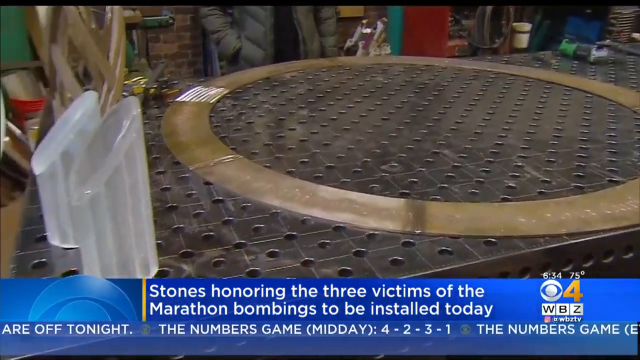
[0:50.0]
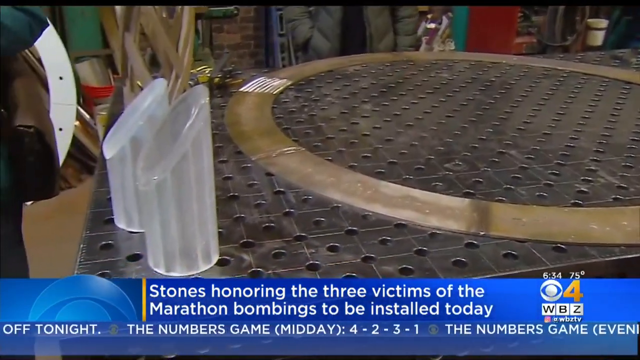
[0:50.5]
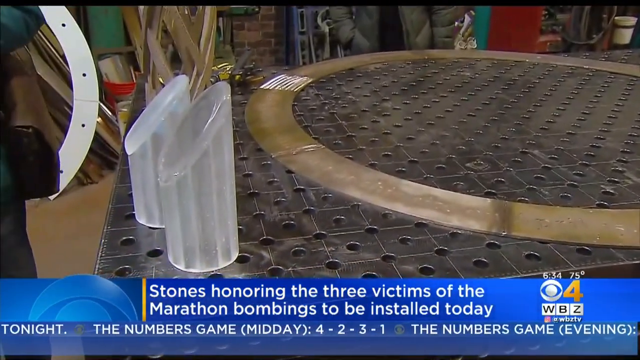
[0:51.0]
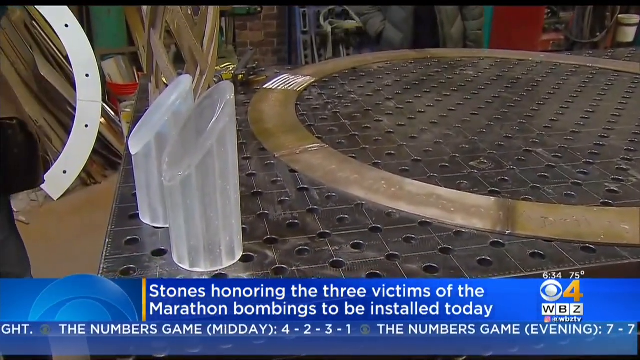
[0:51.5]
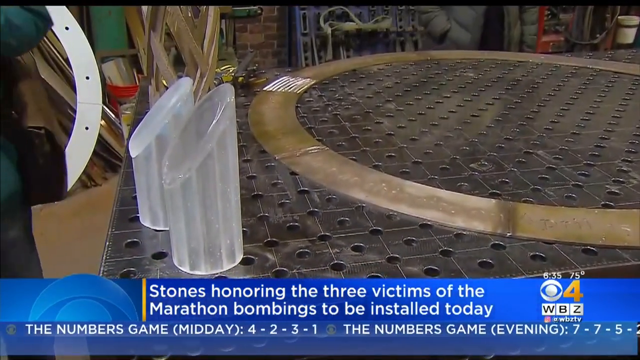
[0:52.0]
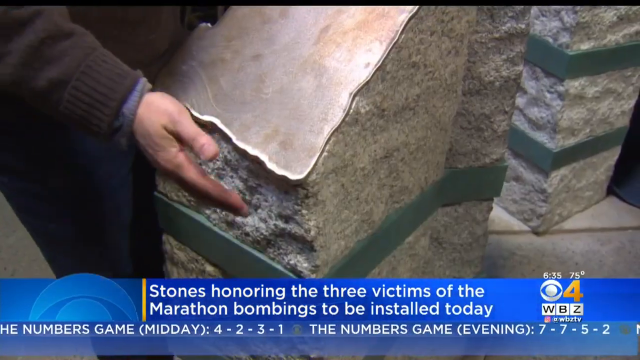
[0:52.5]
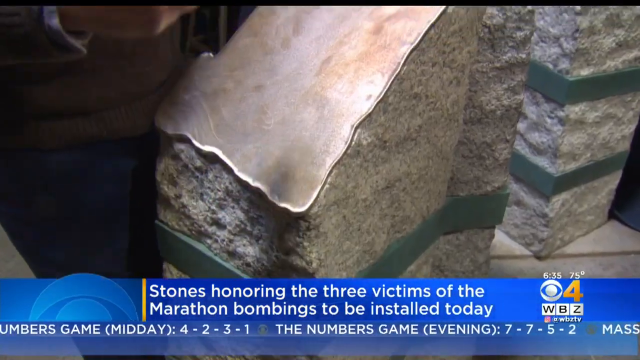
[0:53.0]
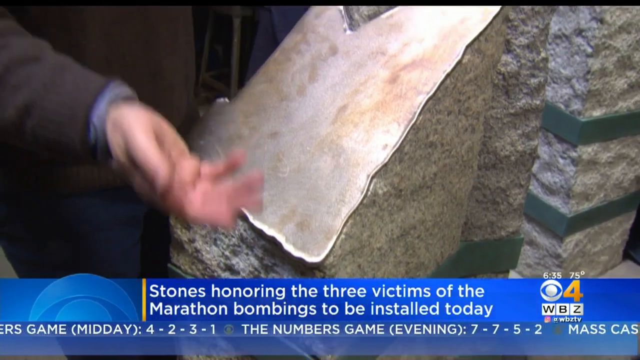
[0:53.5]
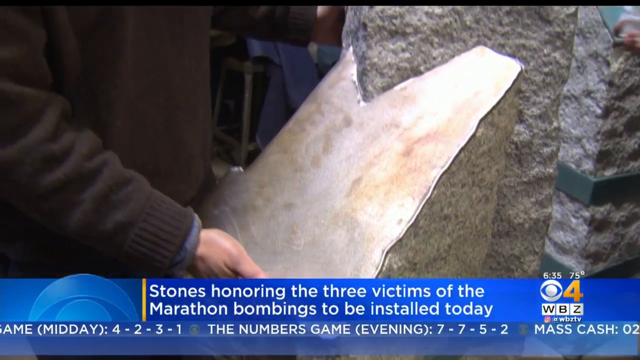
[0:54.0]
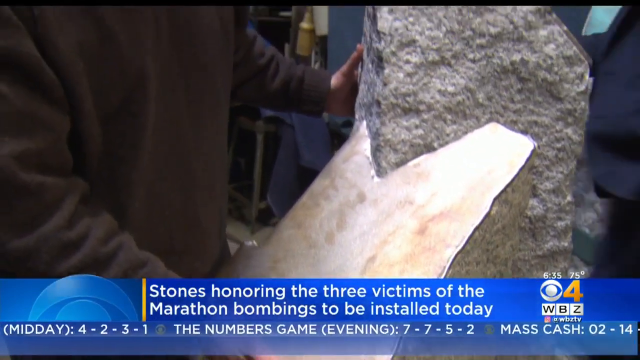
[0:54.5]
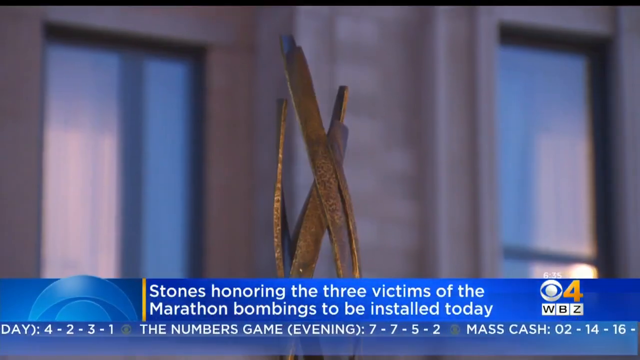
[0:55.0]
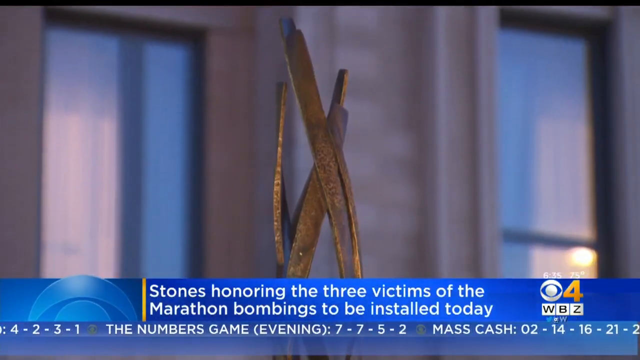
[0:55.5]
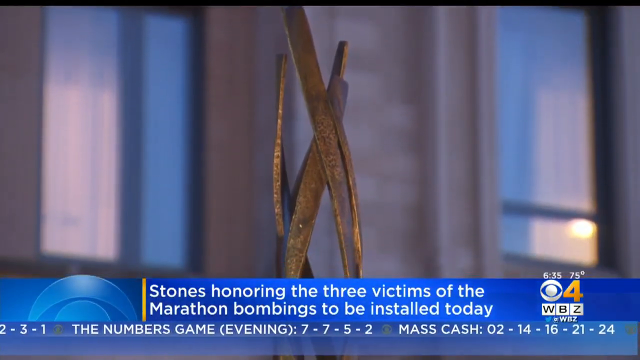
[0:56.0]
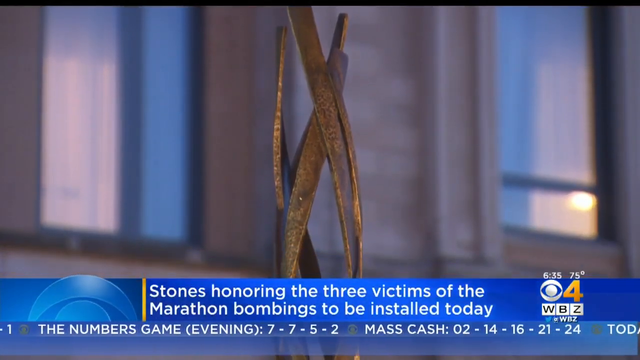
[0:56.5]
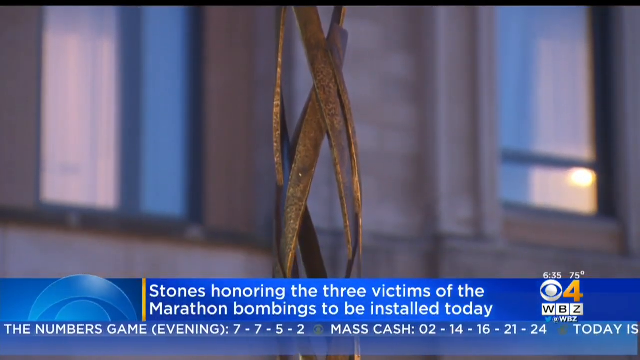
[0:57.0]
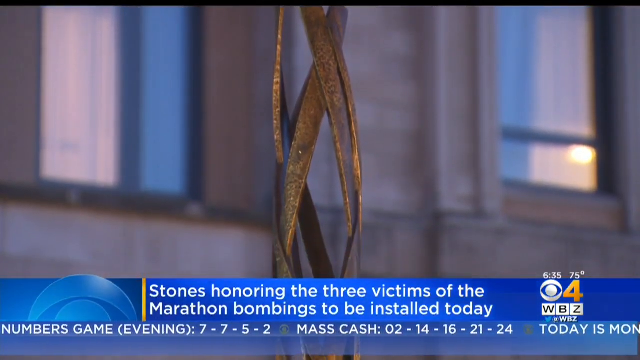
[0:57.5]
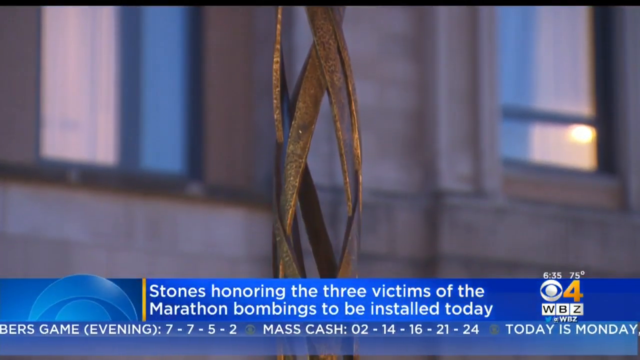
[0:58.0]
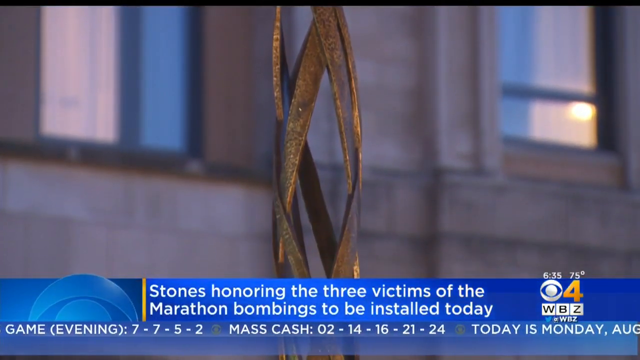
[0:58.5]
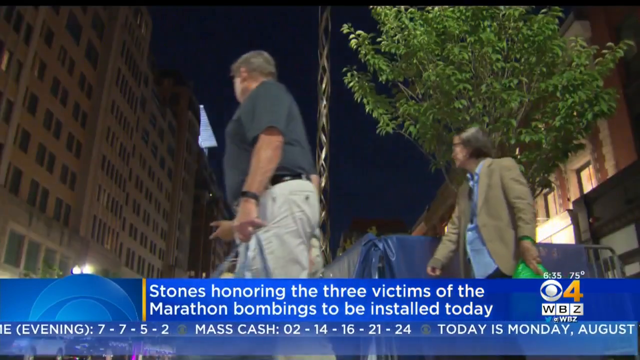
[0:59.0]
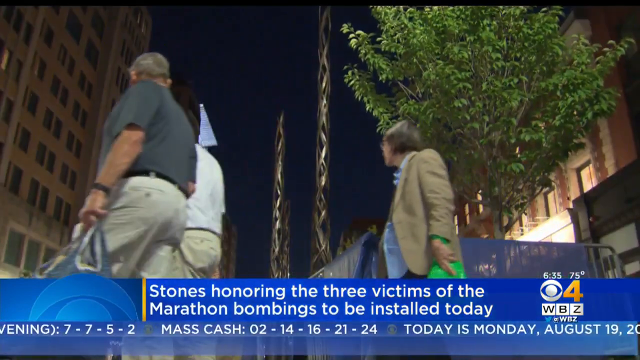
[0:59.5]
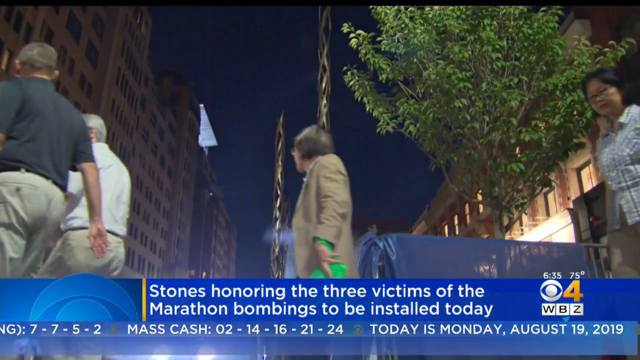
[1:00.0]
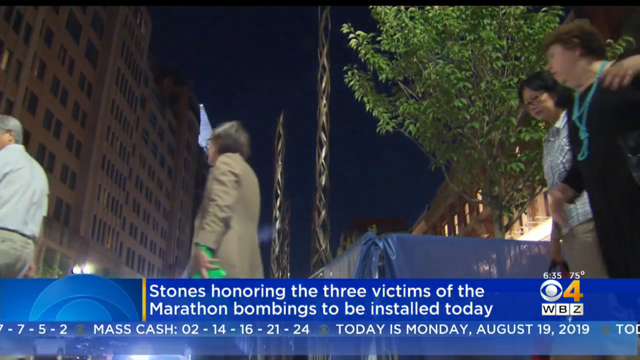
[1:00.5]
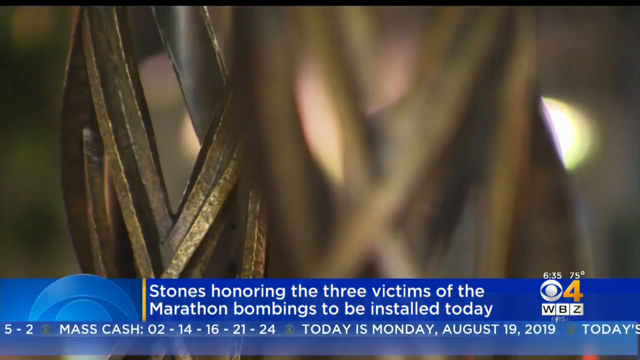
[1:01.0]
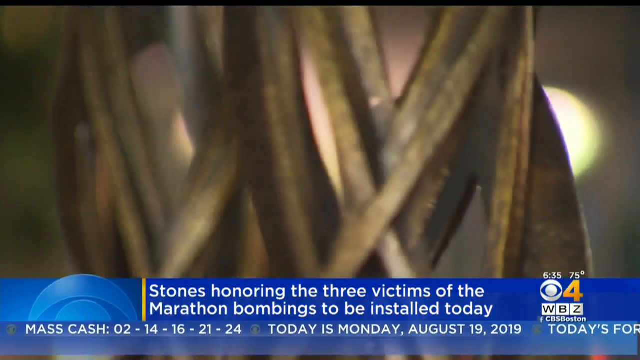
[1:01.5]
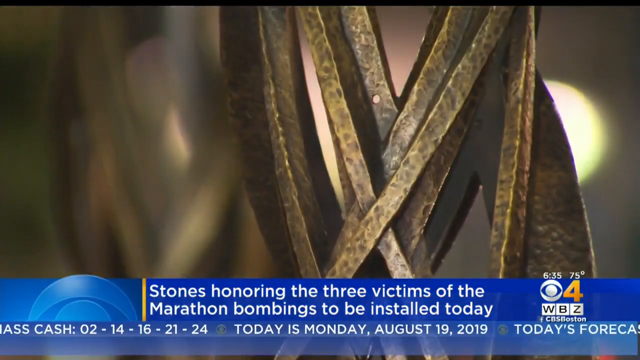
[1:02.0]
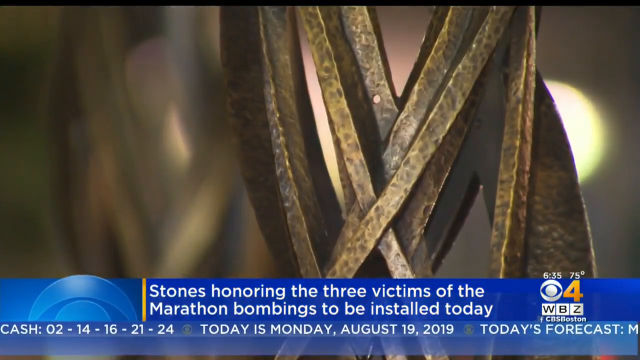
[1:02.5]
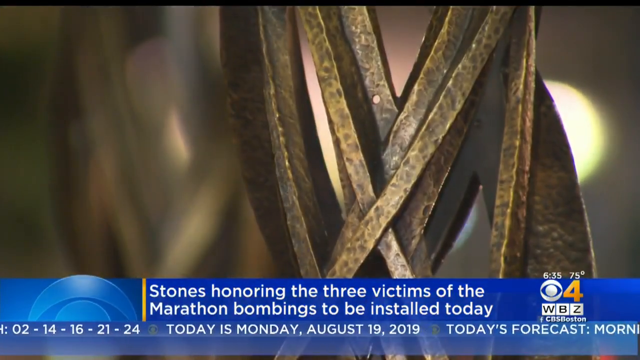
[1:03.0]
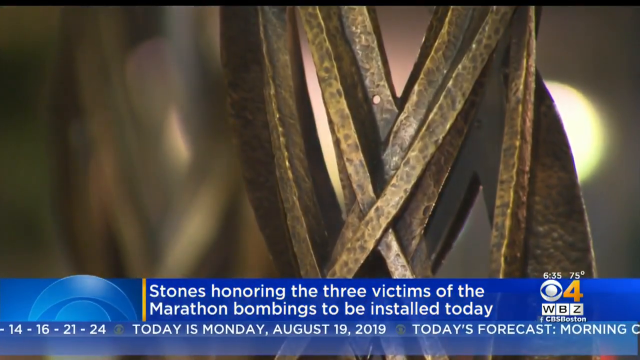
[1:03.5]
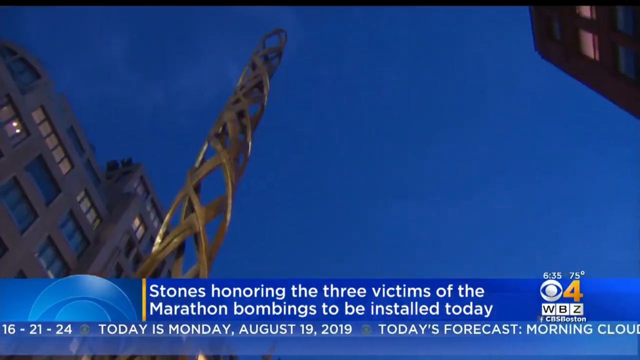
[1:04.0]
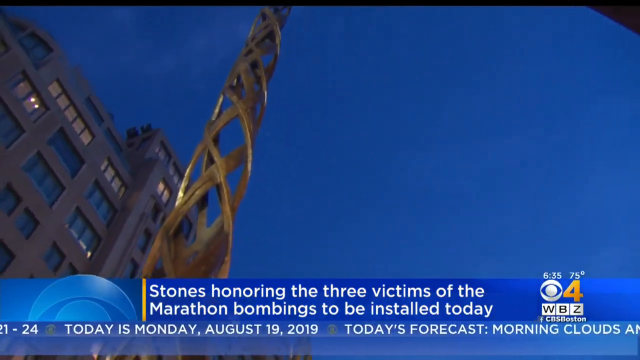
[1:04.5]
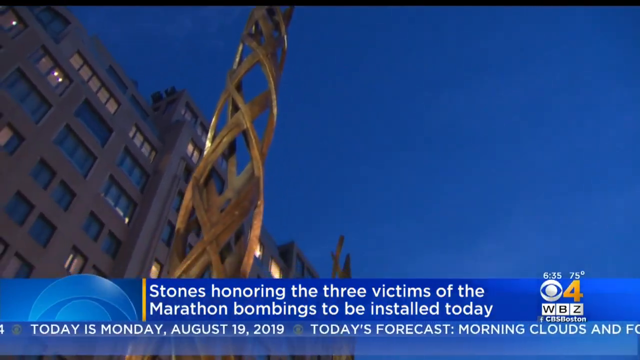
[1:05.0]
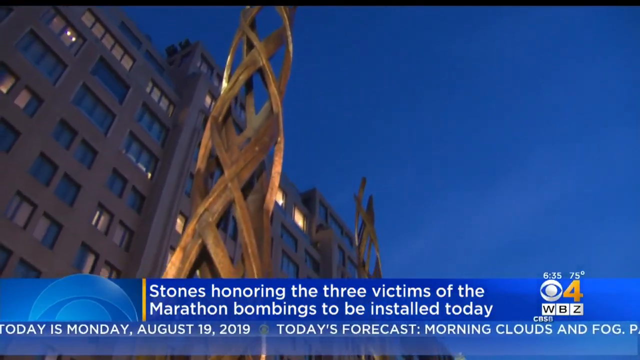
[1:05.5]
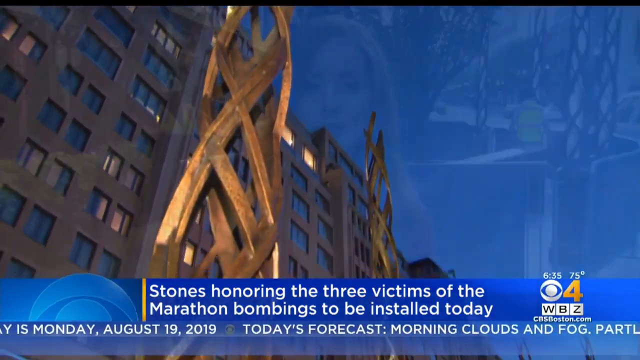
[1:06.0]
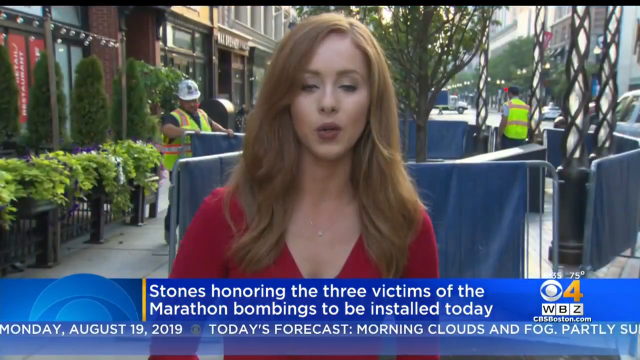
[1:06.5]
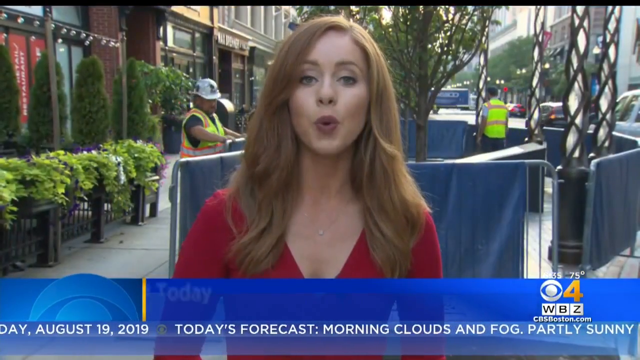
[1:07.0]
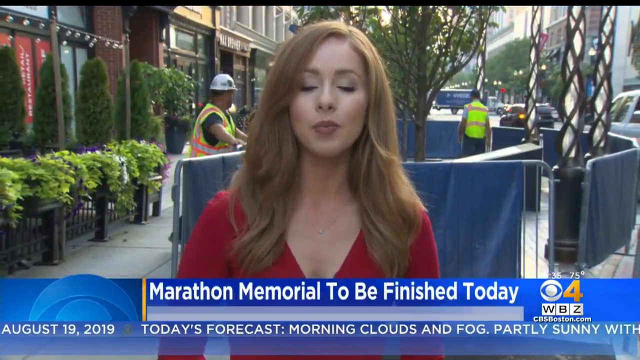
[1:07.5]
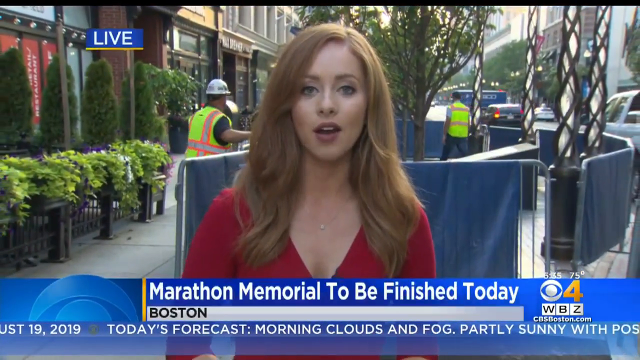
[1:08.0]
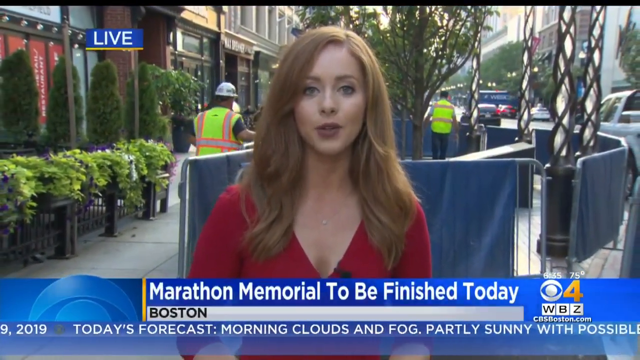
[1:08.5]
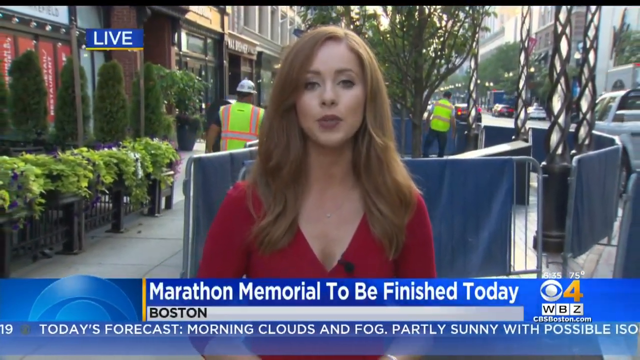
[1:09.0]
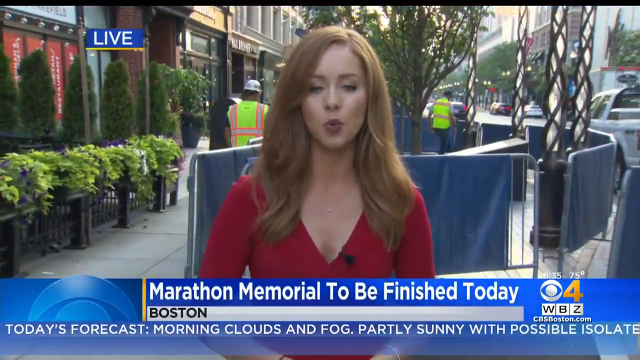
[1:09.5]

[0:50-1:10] The report continues about the stones honoring the three victims of the Marathon bombings, to be installed today. Some steel pieces are installed in the road, and the woman is talking.